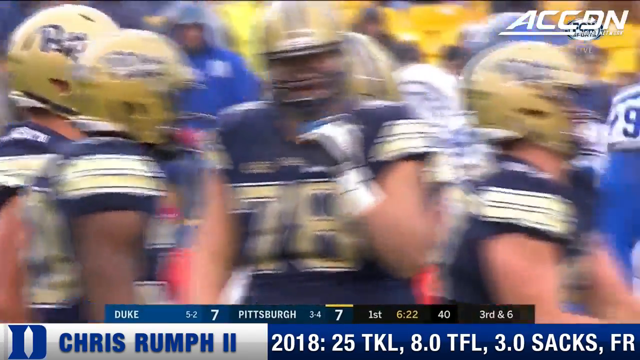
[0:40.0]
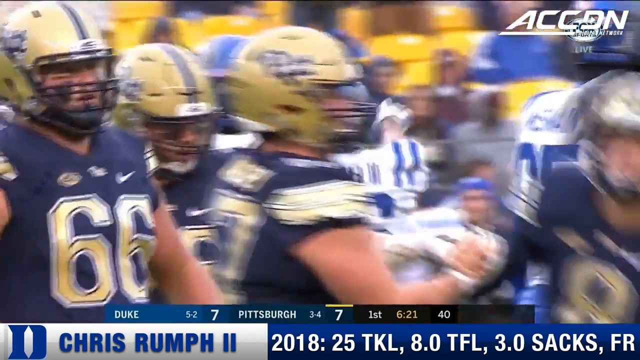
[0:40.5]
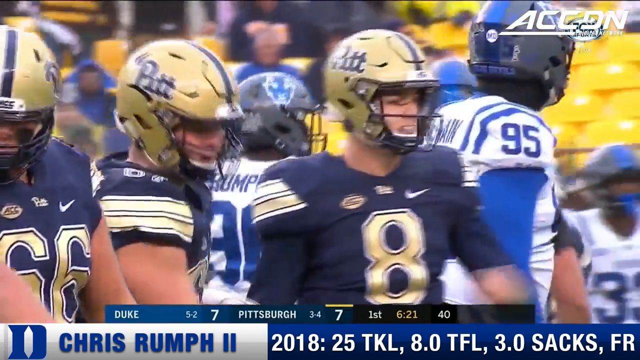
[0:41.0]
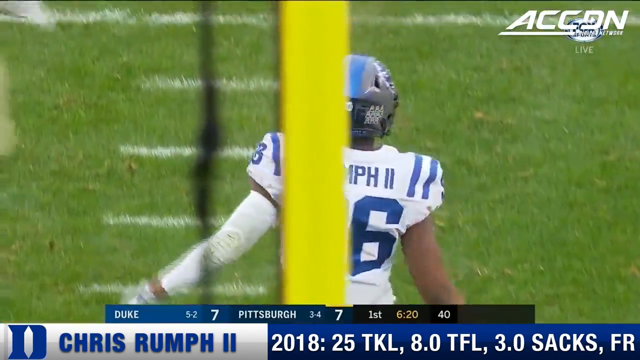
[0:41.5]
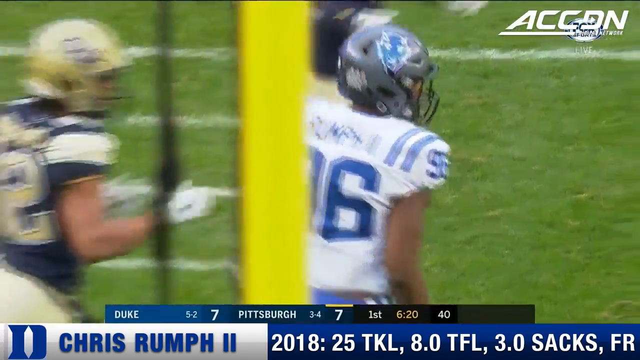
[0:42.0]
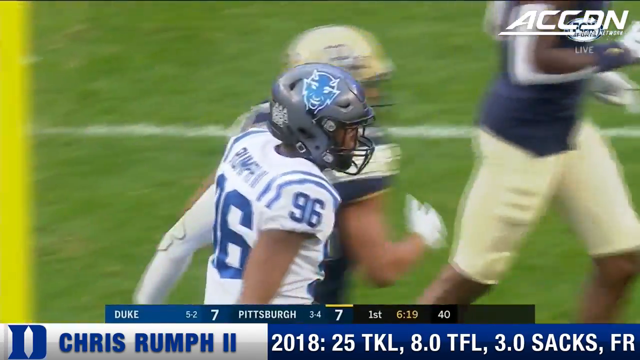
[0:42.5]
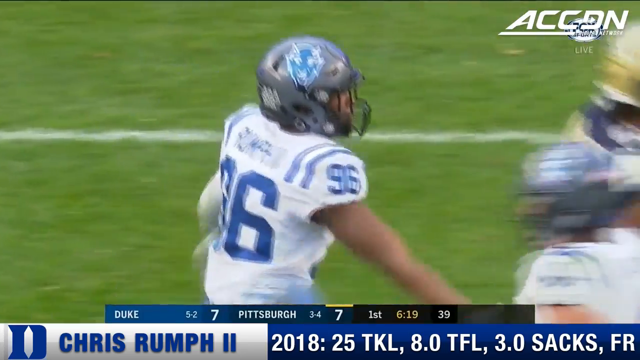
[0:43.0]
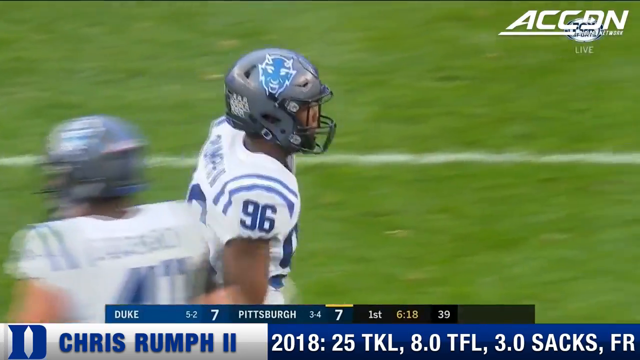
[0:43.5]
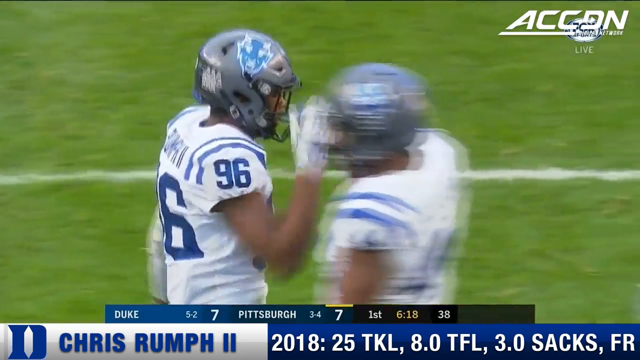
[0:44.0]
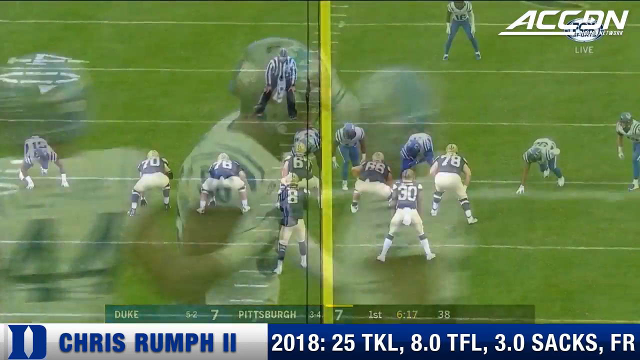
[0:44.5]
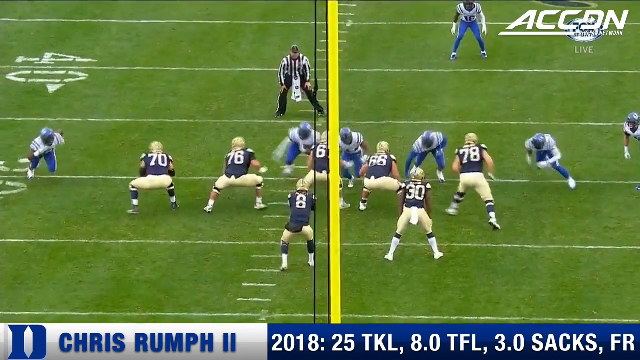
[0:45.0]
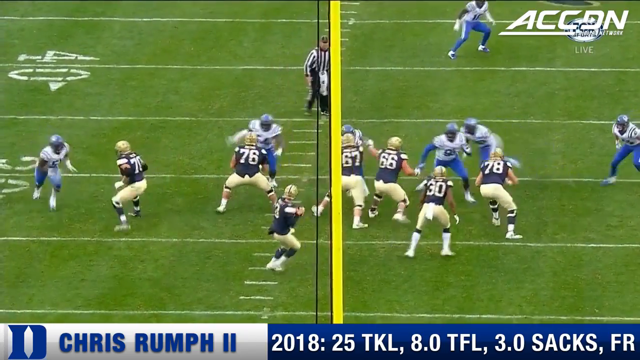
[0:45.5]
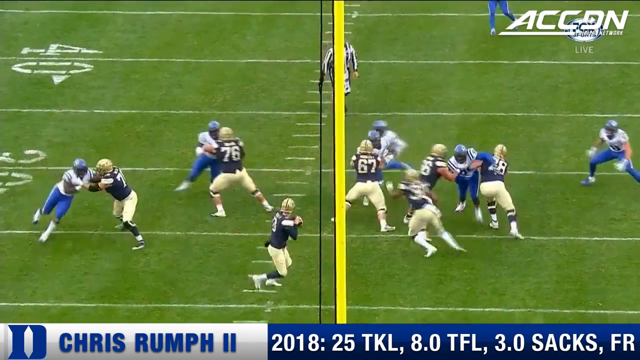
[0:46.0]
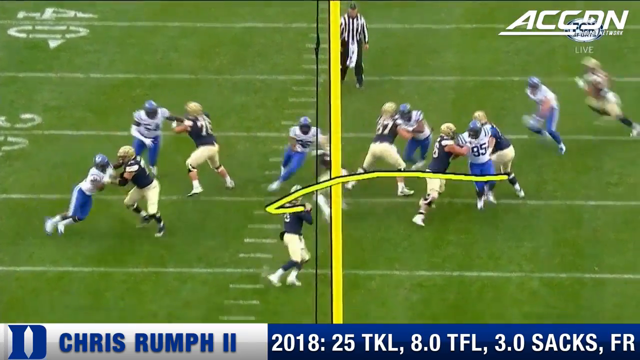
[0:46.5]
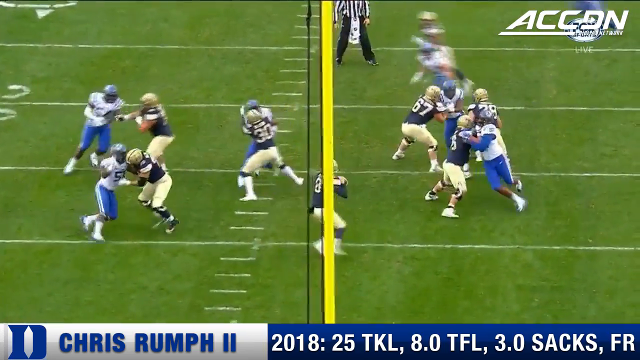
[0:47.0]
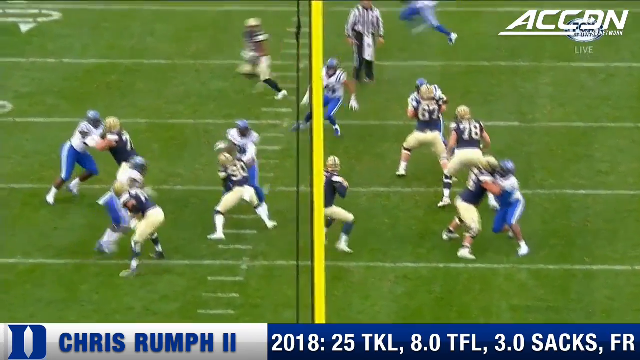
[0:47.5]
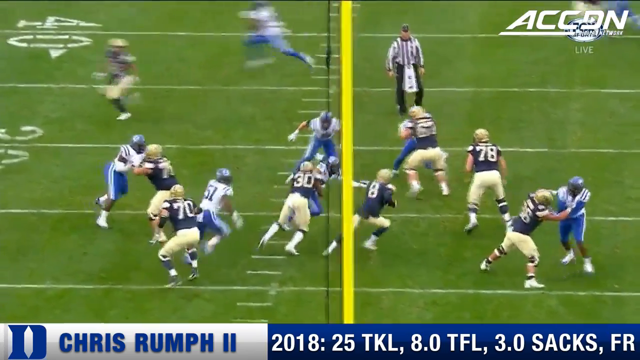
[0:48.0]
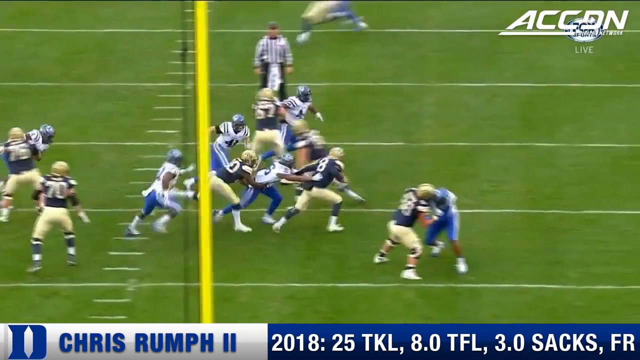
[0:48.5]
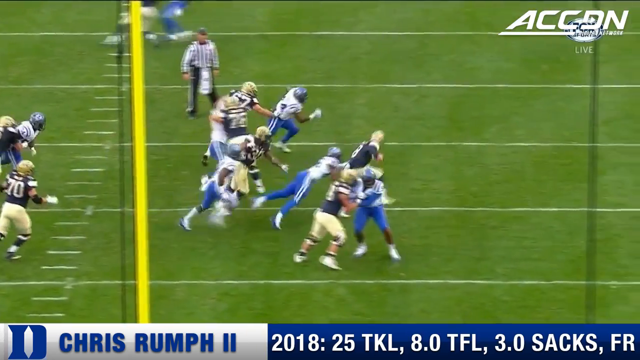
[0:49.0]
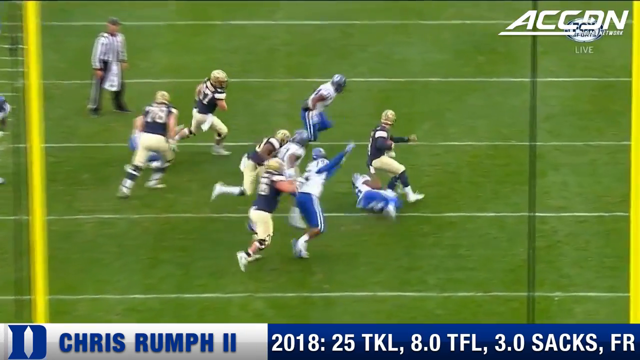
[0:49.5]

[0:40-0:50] A ground-level shot shows the team in blue and gold, apparently Pittsburgh, celebrating around each other. The video then moves to a shot of a Duke player high-fiving his teammates. A replay of the play follows, this time with the camera angled behind Pittsburgh. The quarterback from Pittsburgh drops back into the pocket as if to throw, and players rush him from all sides. A yellow line appears, pointing to the left toward one of the players trying to get at him. That player is stopped by a Duke player but breaks away. The quarterback, who wears the number eight, starts to scramble with the football, but the player who broke away latches on to him and pulls him to the ground. The play apparently was third and ten.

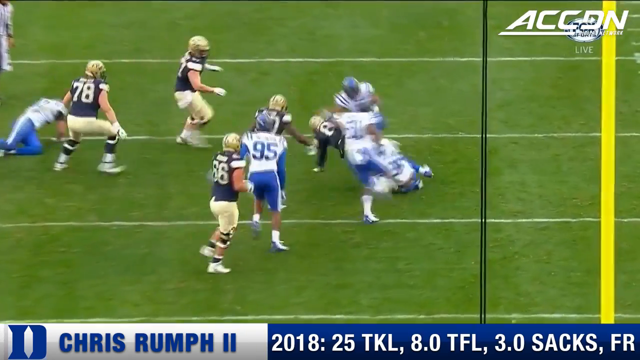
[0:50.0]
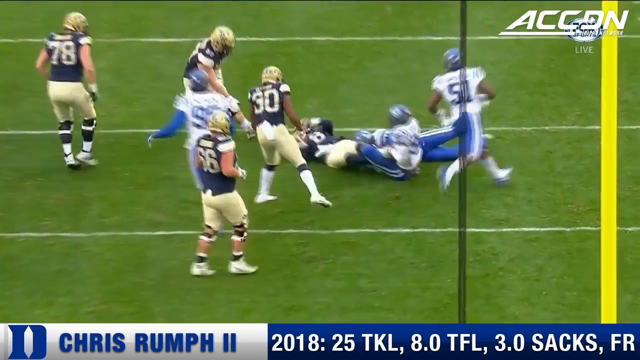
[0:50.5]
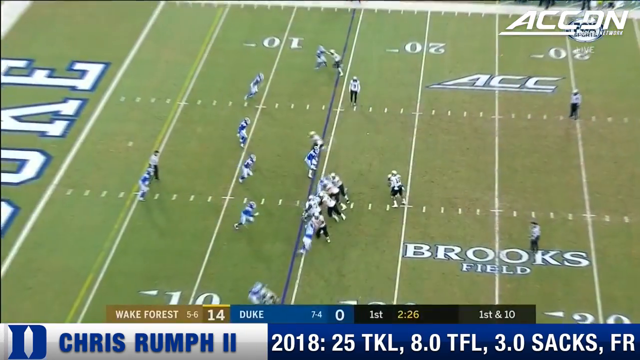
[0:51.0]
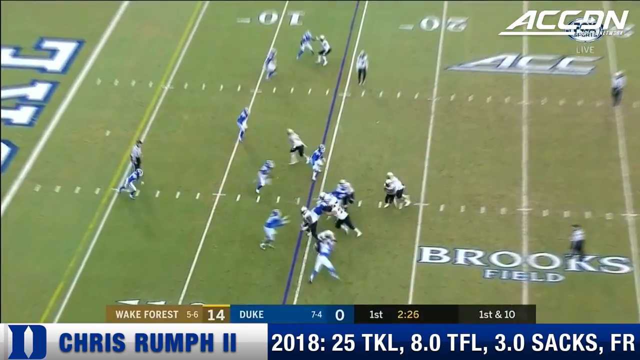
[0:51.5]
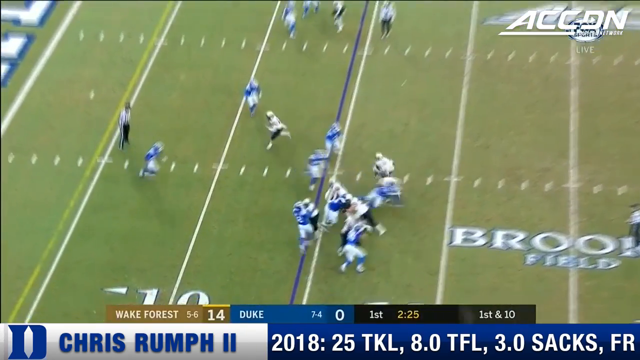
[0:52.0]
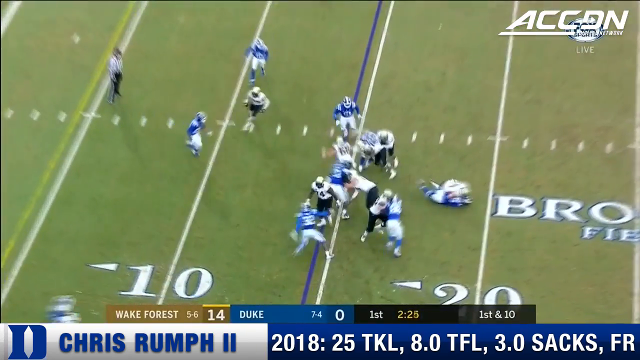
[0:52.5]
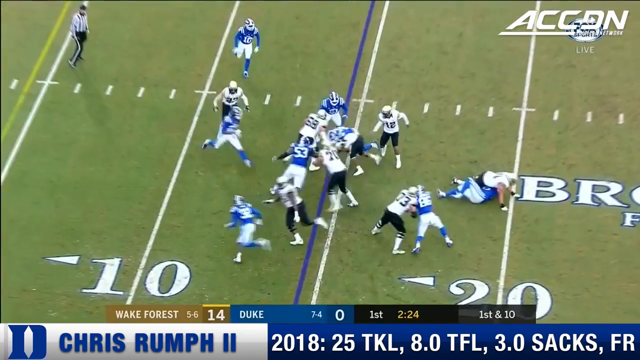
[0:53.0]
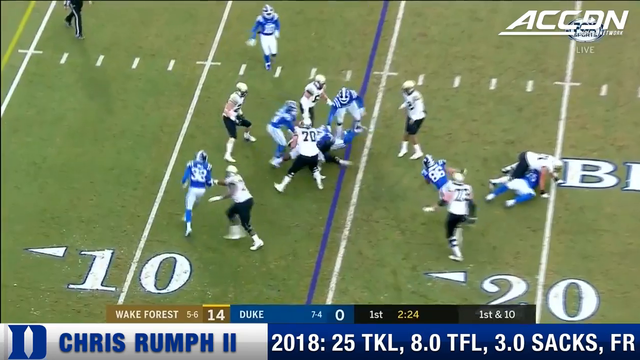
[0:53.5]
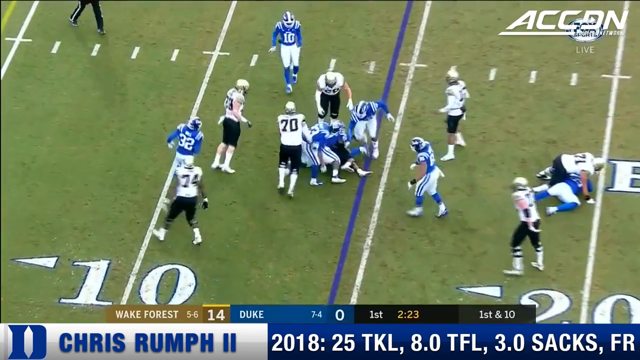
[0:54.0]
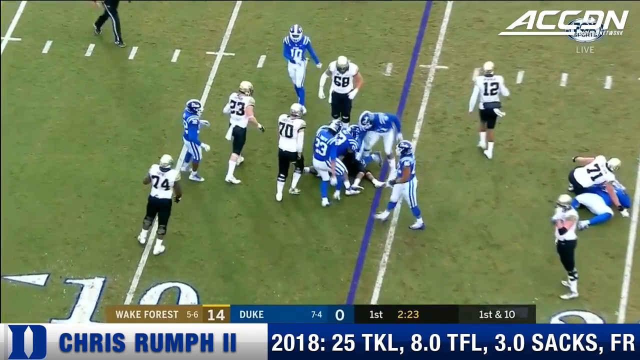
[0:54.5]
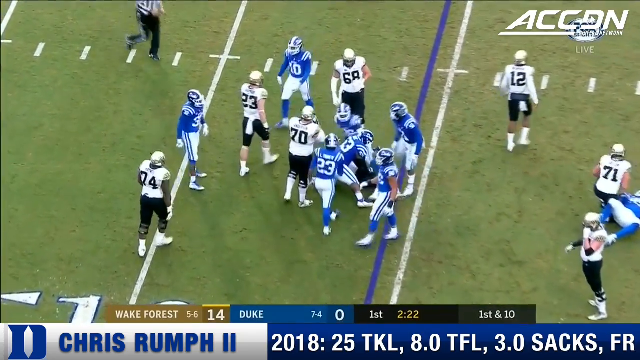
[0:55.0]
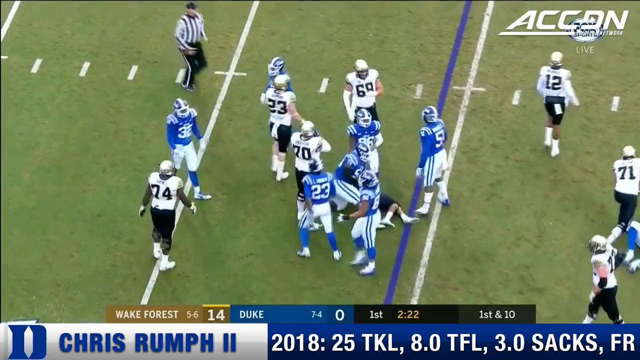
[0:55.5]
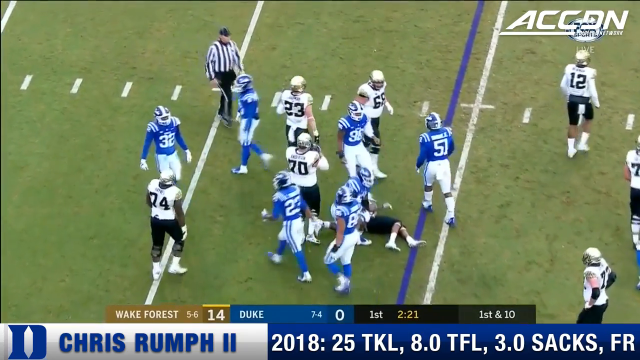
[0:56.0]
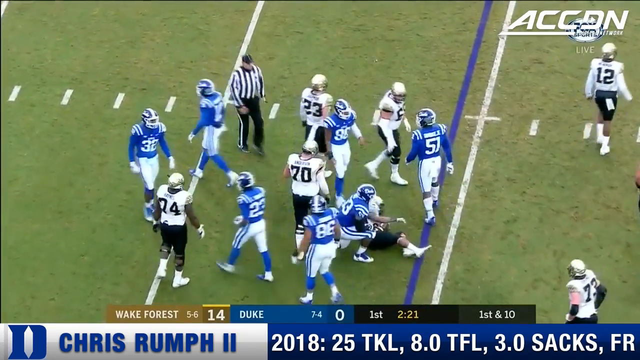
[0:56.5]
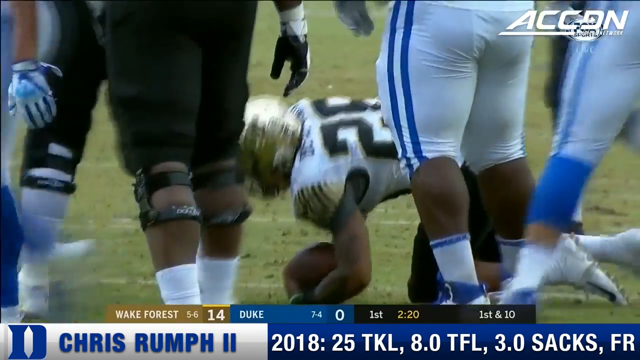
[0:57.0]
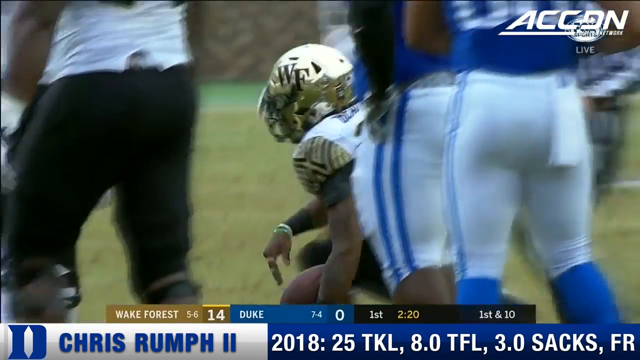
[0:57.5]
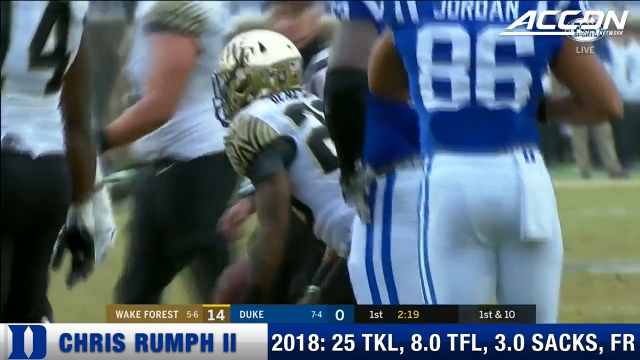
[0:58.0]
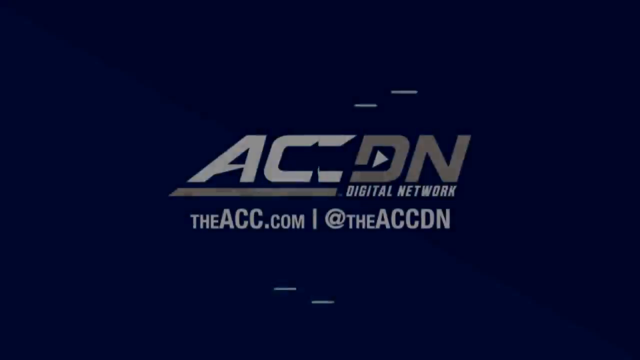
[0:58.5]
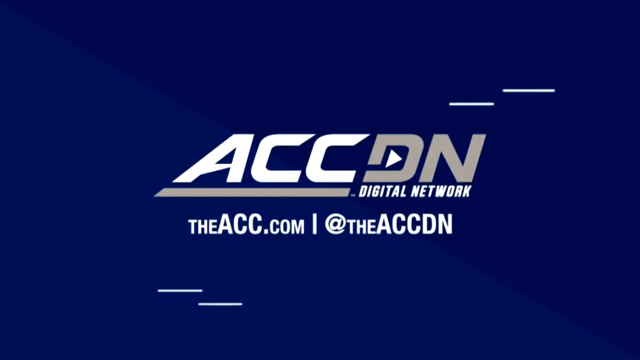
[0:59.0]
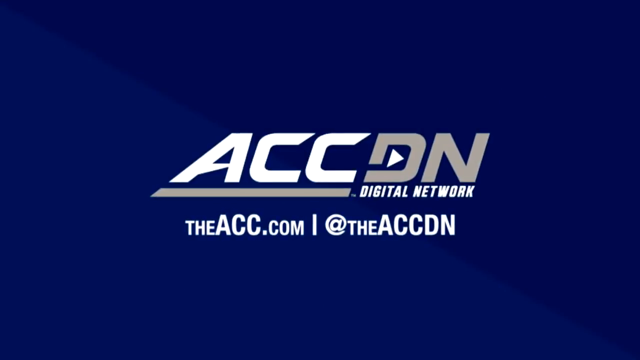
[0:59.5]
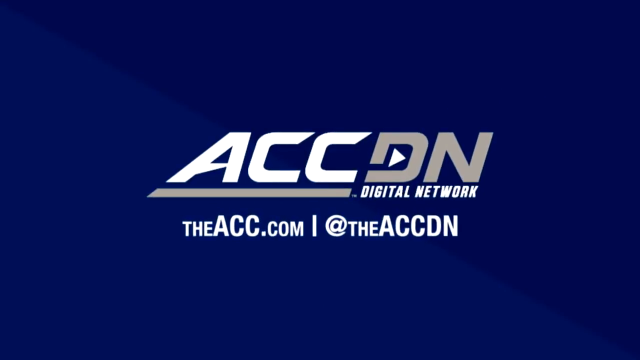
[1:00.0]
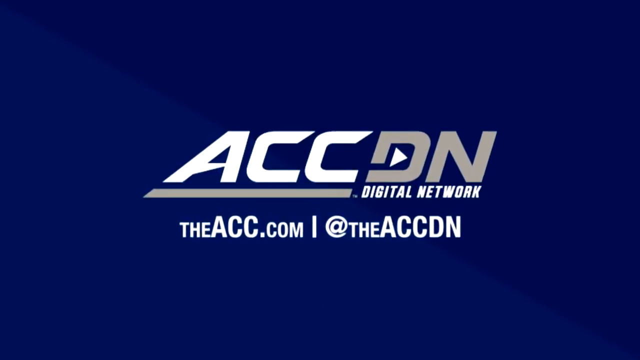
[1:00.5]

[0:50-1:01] The quarterback from Duke, who has just been sacked, gets up in the aftermath. The video quickly transitions to another game, in a zoomed-out shot of players mid-play: players wearing blue and white and players wearing white and what looks to be black. The chyron underneath shows Wake Forest with a score of 14 and Duke with a score of 0, in the first quarter with two minutes and 25 seconds to go, on first and ten. The players scramble around, and what looks to be maybe the running back tries to run the ball but is quickly sacked, apparently barely getting past the blue line on the field. The players get up, and the screen transitions to the ACCDN logo.